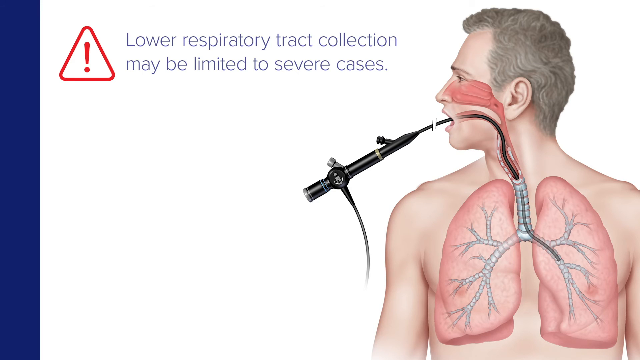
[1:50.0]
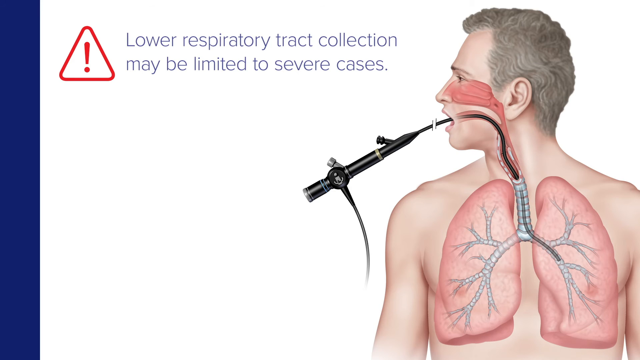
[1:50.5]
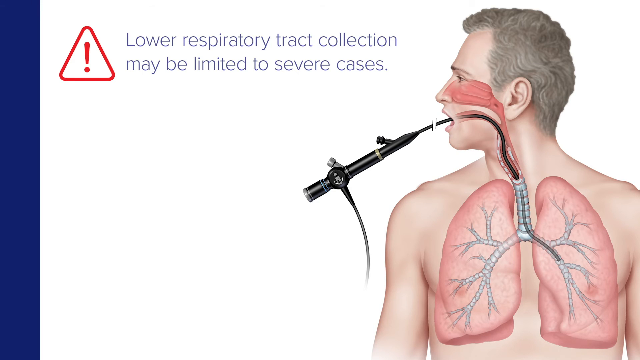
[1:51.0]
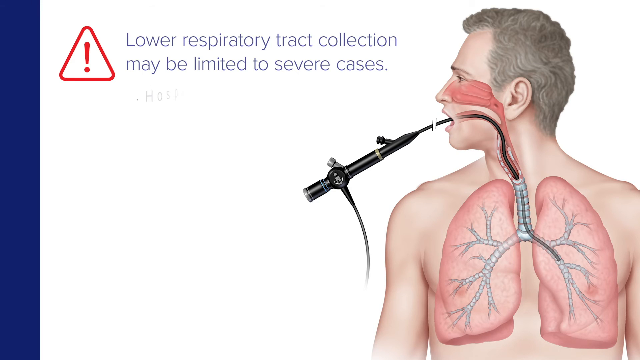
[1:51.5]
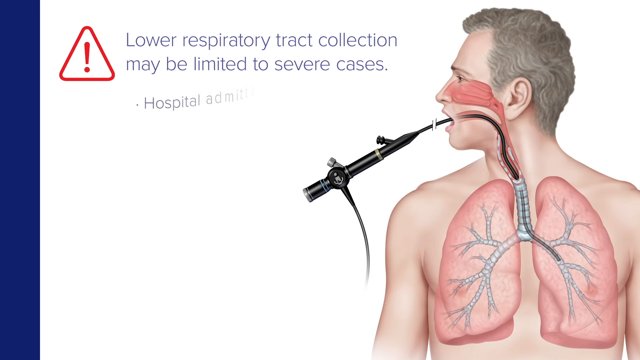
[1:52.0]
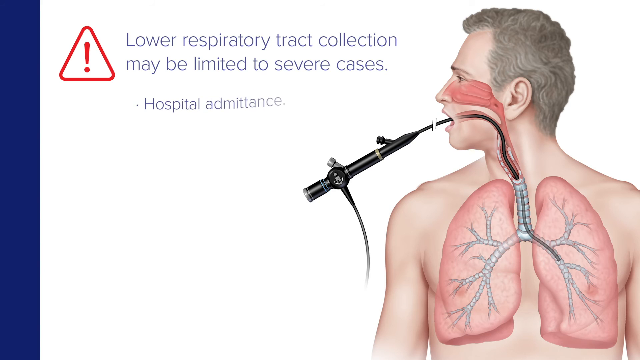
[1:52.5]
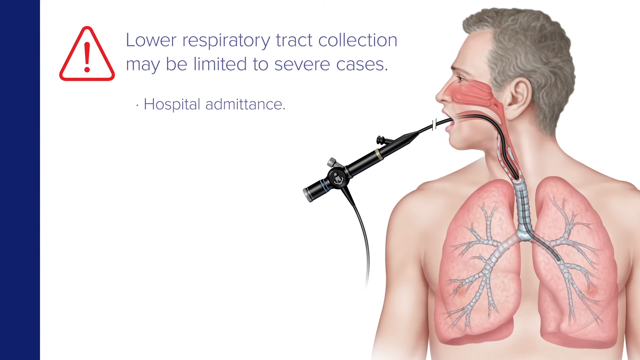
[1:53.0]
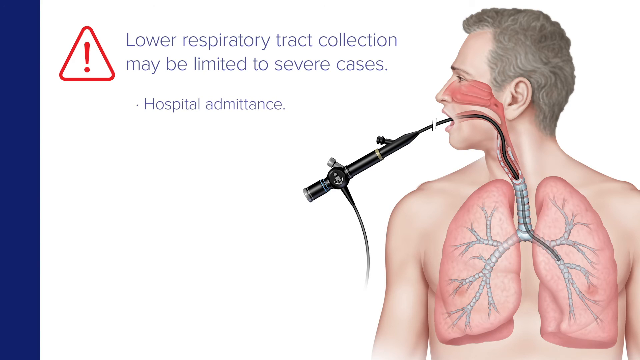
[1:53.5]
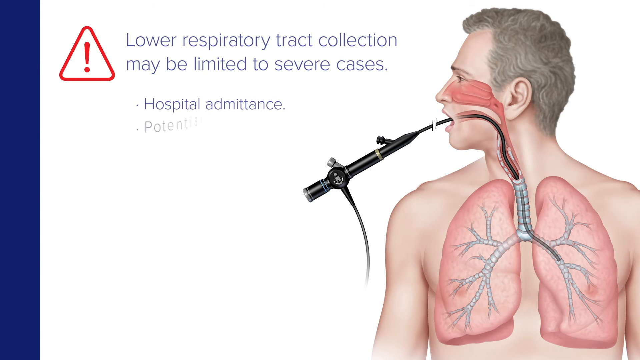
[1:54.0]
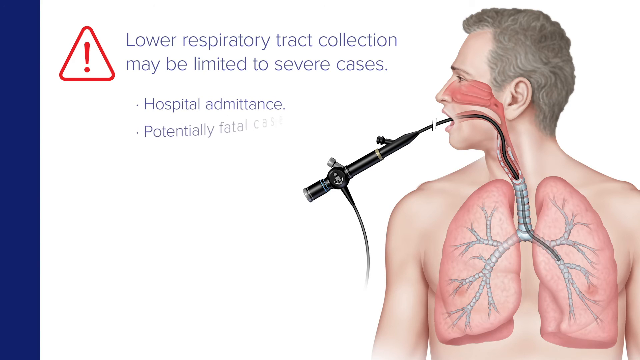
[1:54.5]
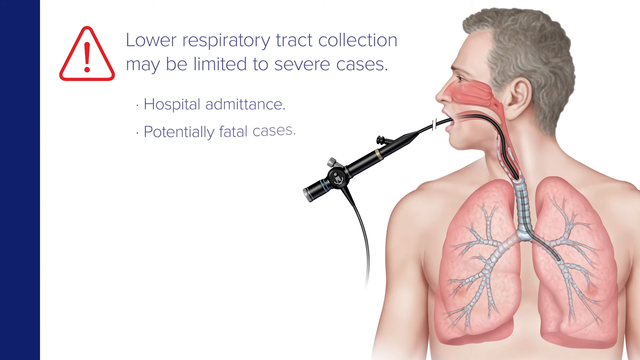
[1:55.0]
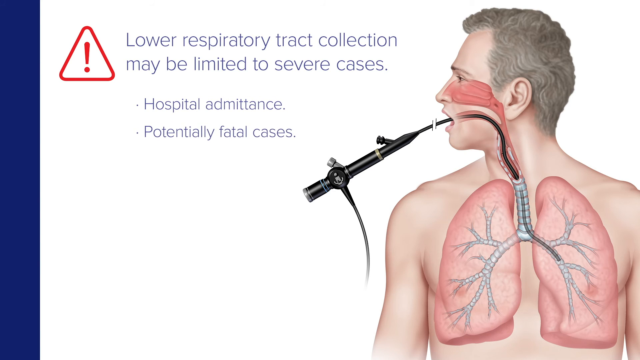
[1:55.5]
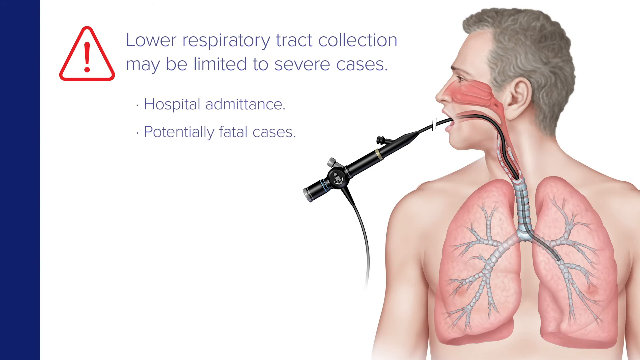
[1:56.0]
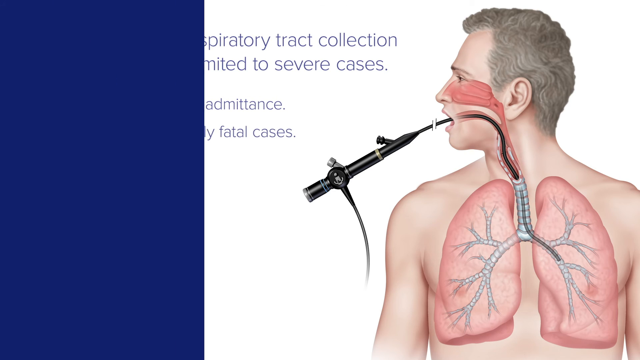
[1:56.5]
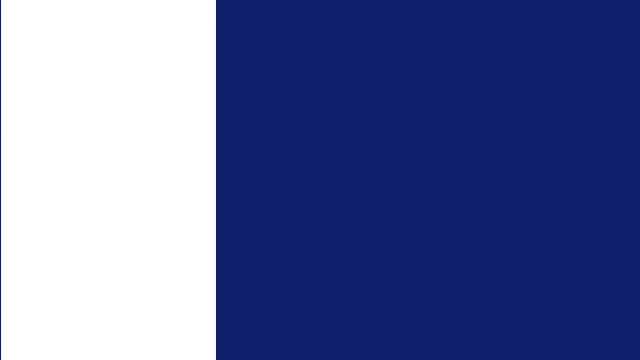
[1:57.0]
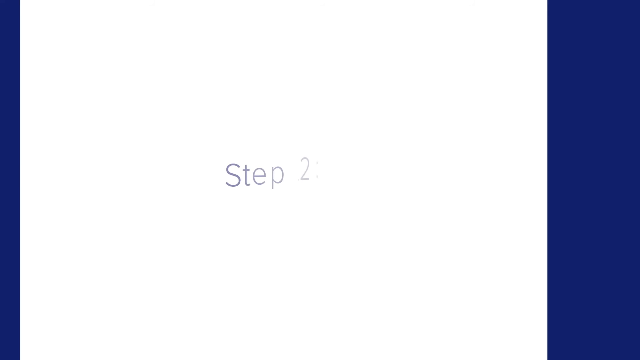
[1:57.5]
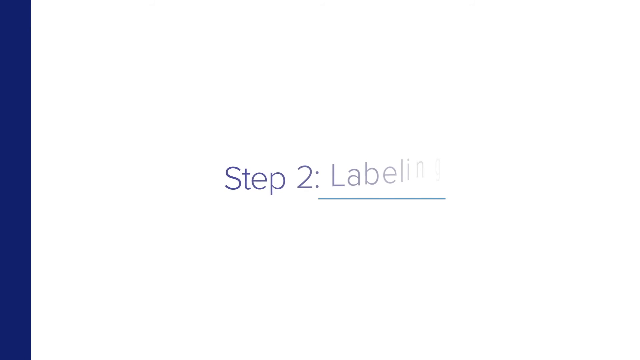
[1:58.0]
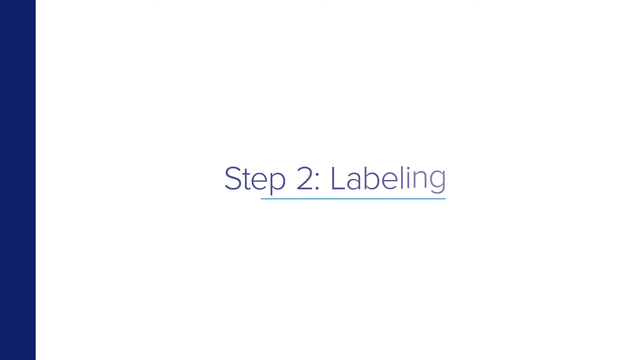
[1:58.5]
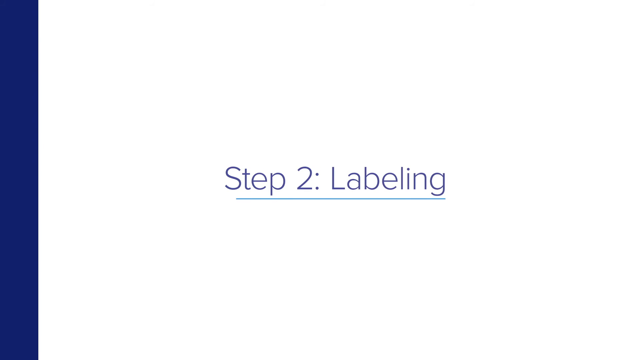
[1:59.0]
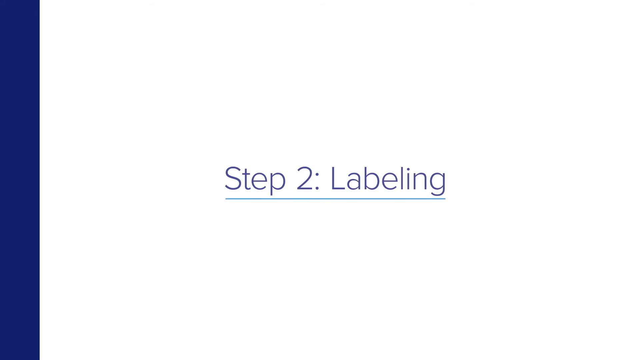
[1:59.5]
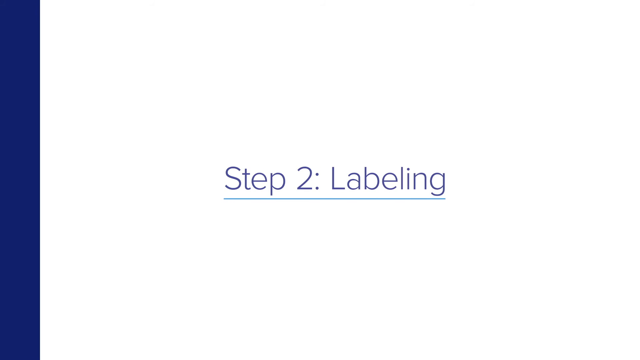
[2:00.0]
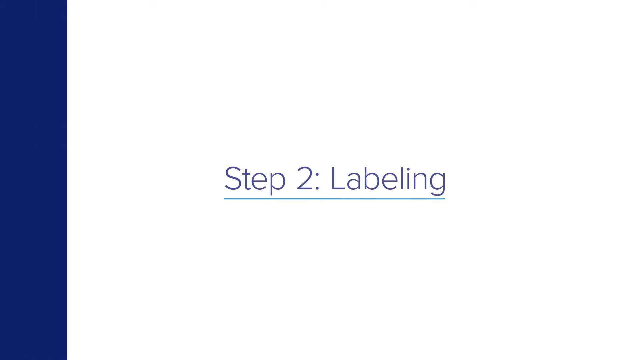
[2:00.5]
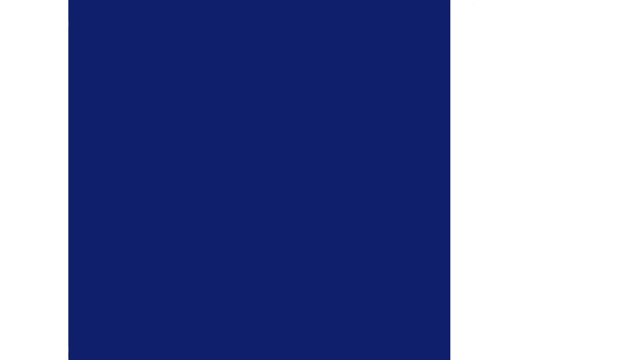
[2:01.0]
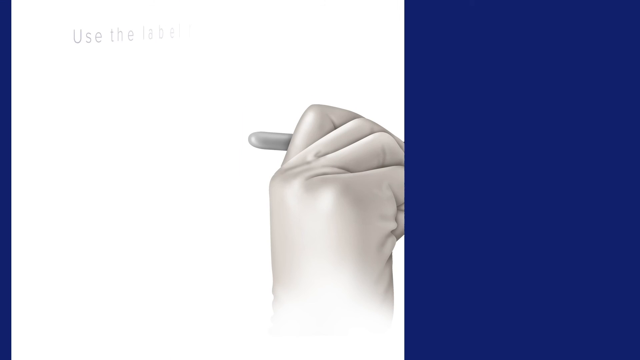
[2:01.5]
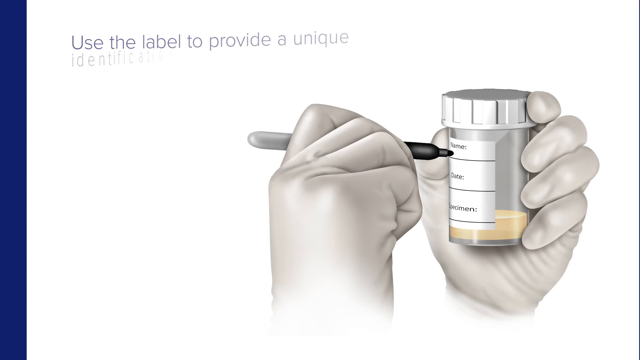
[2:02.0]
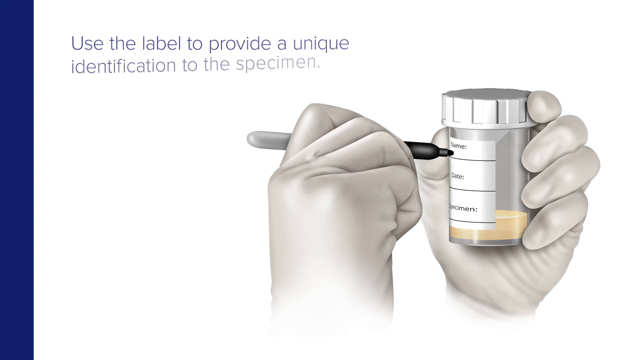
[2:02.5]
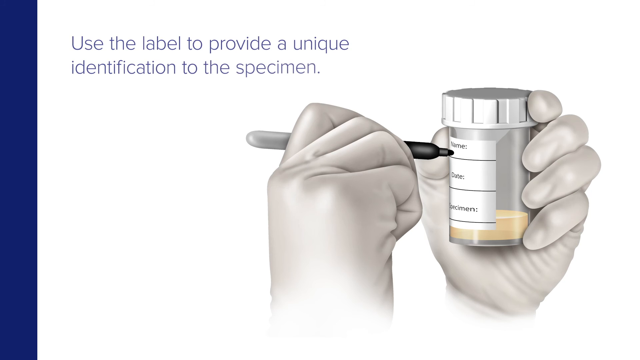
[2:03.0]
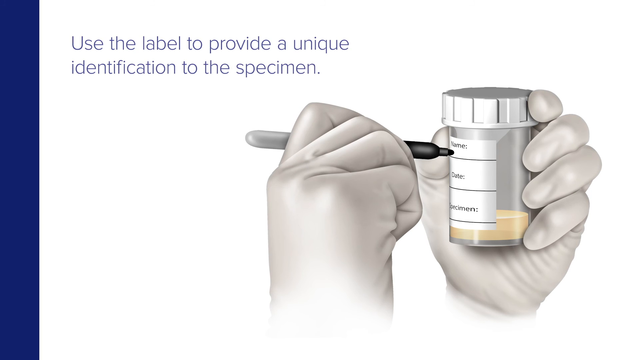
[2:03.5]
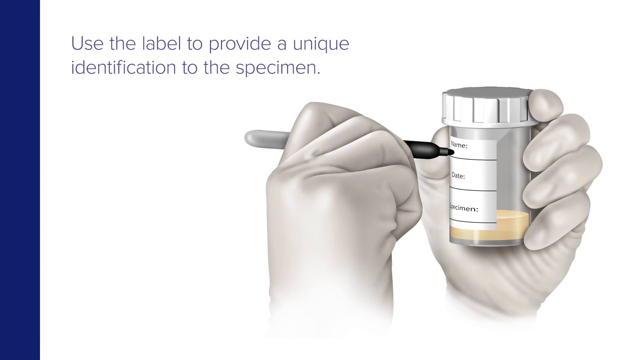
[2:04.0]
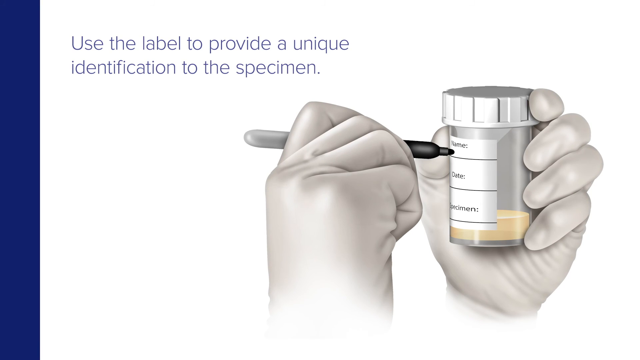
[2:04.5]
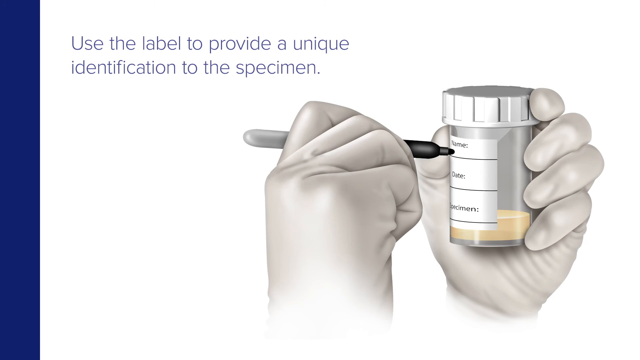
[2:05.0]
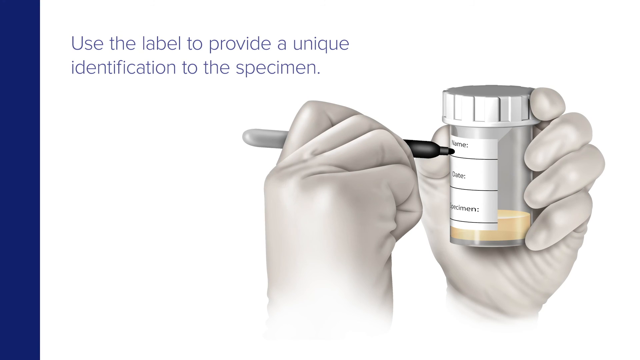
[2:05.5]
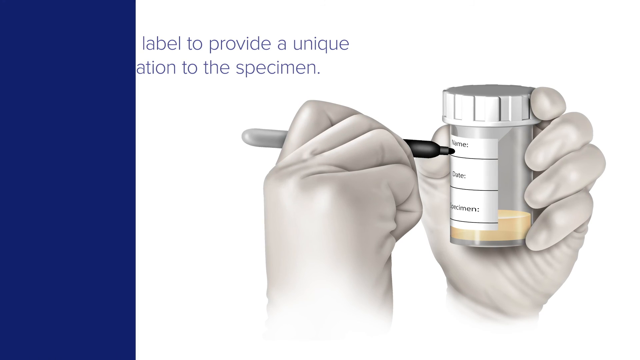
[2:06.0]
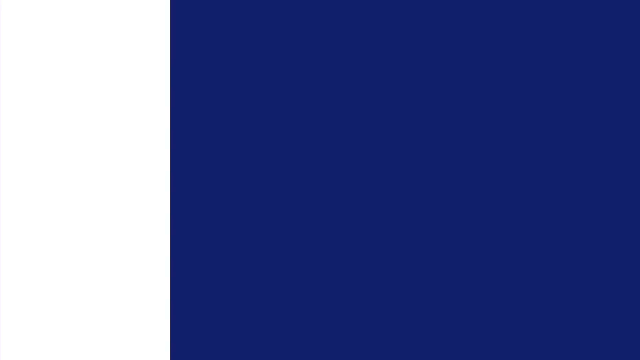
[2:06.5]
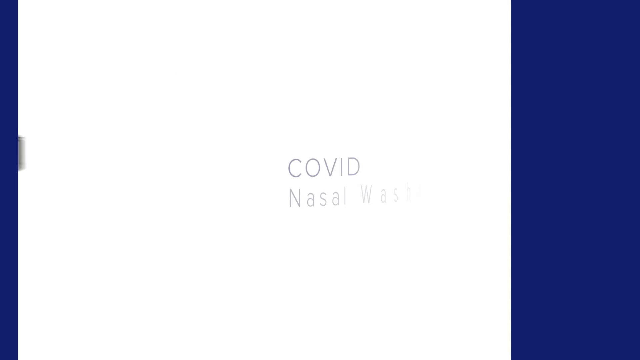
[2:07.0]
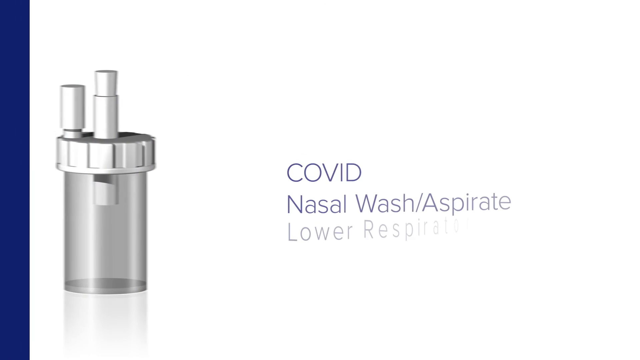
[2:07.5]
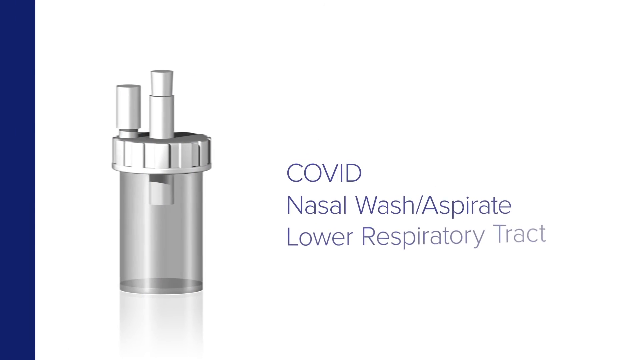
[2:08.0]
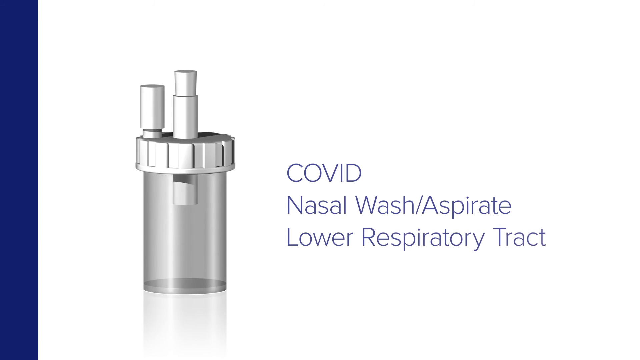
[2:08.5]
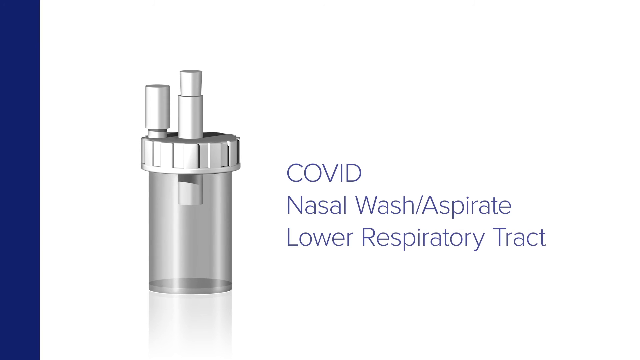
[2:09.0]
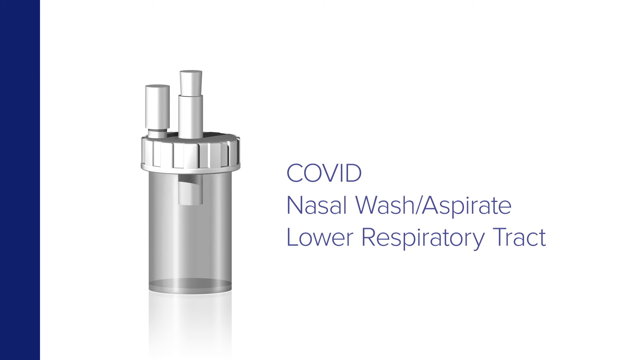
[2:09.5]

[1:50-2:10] The illustrated man faces forward with his head to the side and his mouth and eyes open, with the device that looks almost like a black fishing rod with a black tube at the end down his throat. The red warning symbol, a red exclamation mark within a red rounded-triangle outline, is shown, and blue lettering says "lower respiratory tract collection may be limited to severe cases." Smaller words come down underneath to form a bullet point reading "hospital admittance," and more words gently fall into place as a second bullet point reading "potentially fatal cases." The navy or royal blue from the left border sweeps across the screen to the right, wiping the slide, and words appear reading "Step 2: Labeling" with a light blue line underneath. The navy swipes across, and two gloved hands are shown with a marker, the left hand holding a specimen bottle that now looks filled maybe about a fifth full with yellow liquid. Words at the upper left say "use the label to provide a unique identification to the specimen." Blue sweeps across, and the illustration of the specimen bottle appears on the left, with what looks like a thick straw through its cover. Text reads "COVID" on the first line, "nasal wash aspirate" on the second and "lower respiratory tract" on the third.